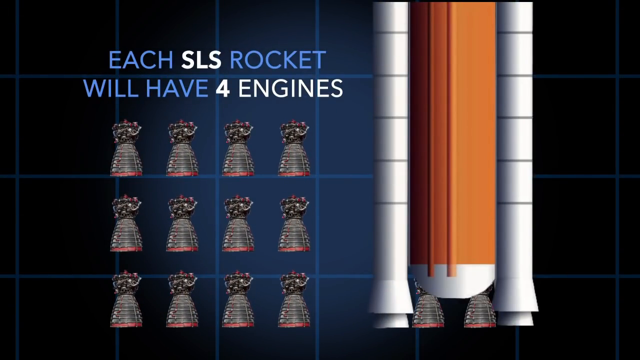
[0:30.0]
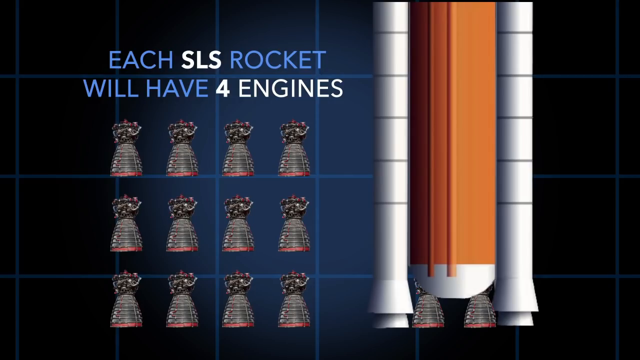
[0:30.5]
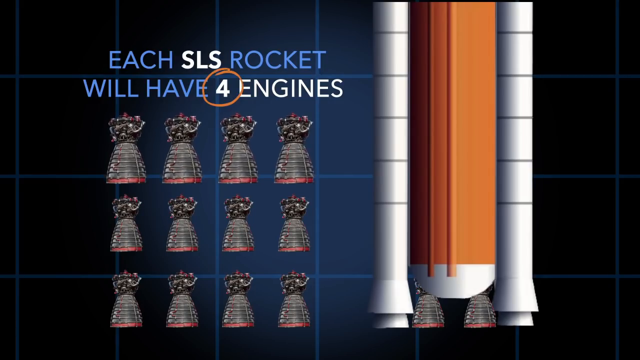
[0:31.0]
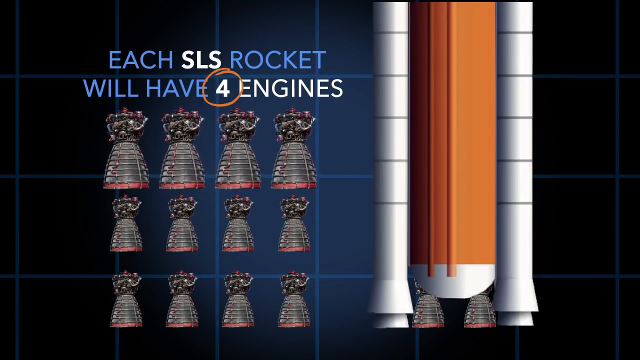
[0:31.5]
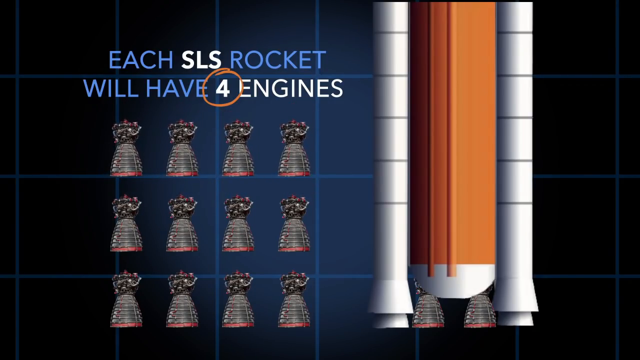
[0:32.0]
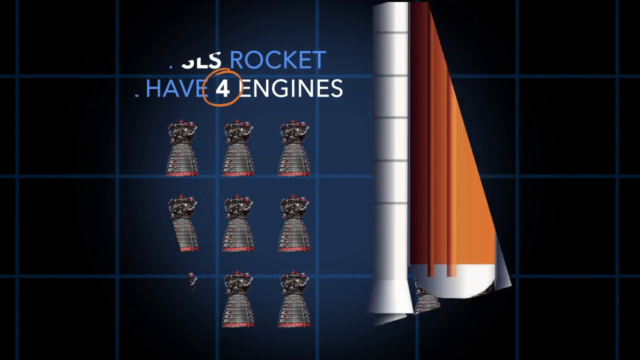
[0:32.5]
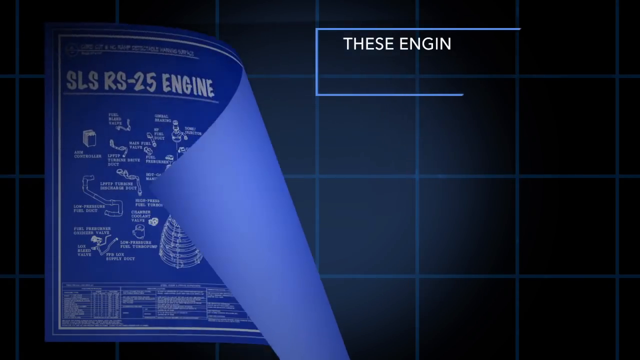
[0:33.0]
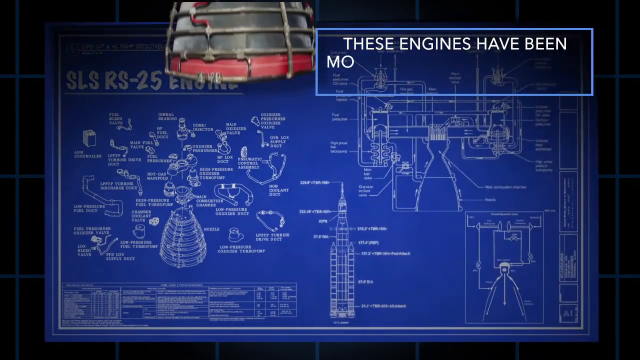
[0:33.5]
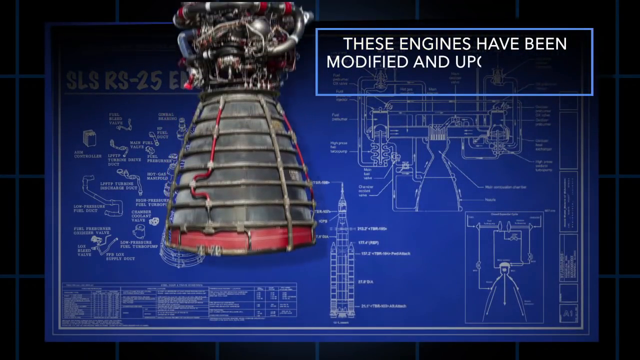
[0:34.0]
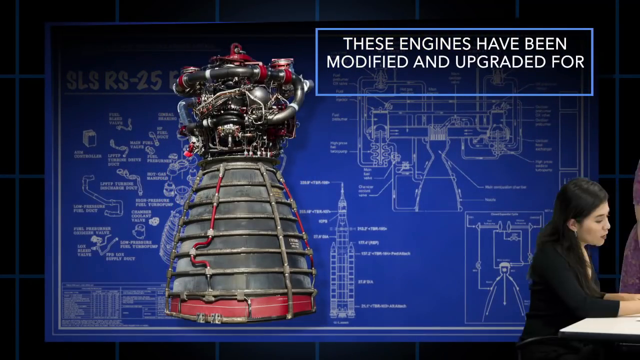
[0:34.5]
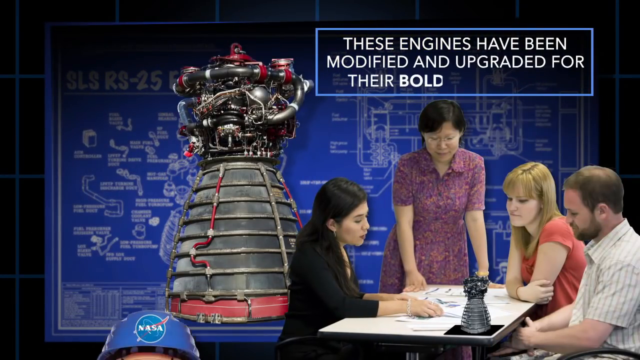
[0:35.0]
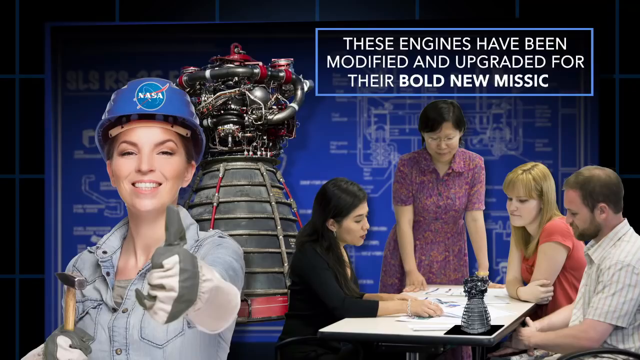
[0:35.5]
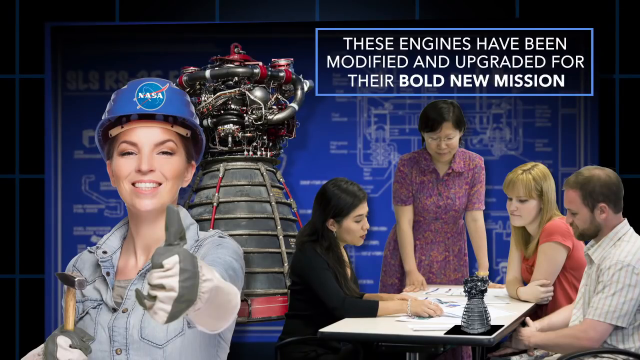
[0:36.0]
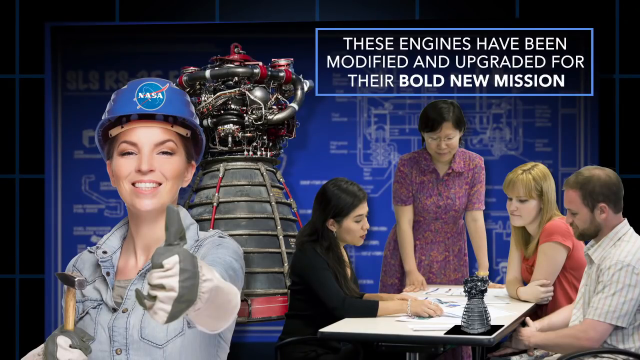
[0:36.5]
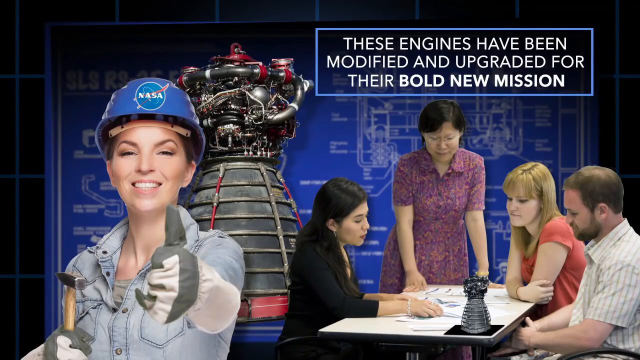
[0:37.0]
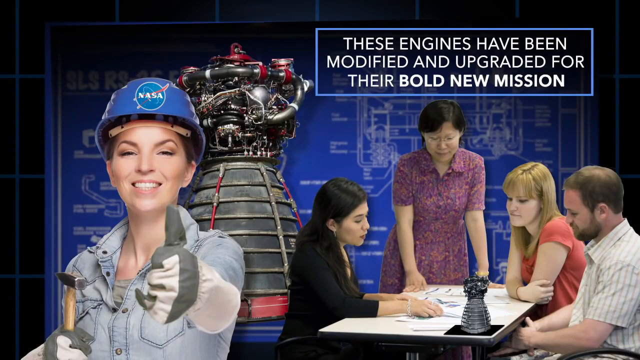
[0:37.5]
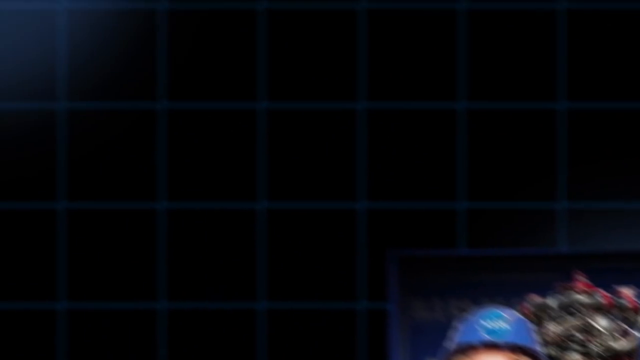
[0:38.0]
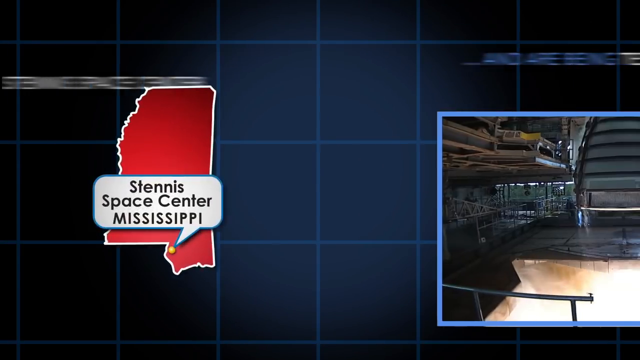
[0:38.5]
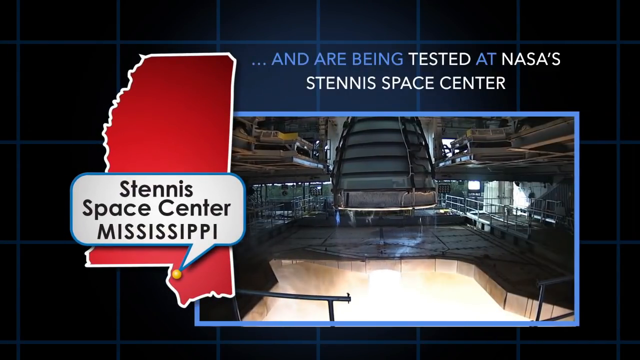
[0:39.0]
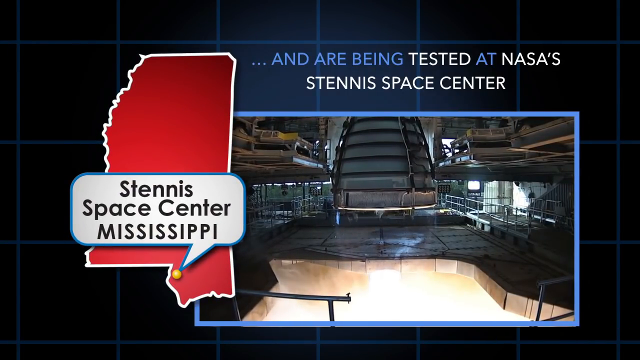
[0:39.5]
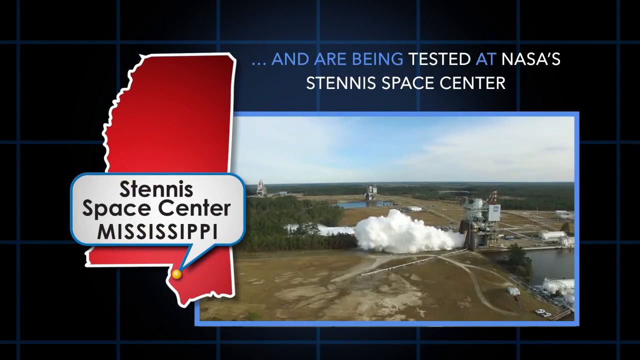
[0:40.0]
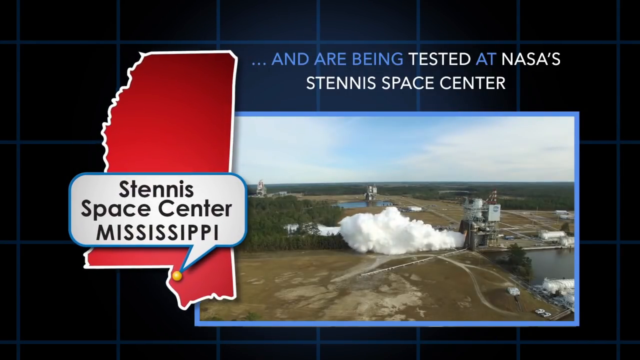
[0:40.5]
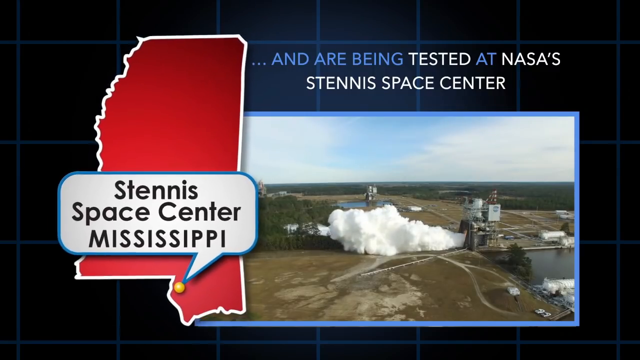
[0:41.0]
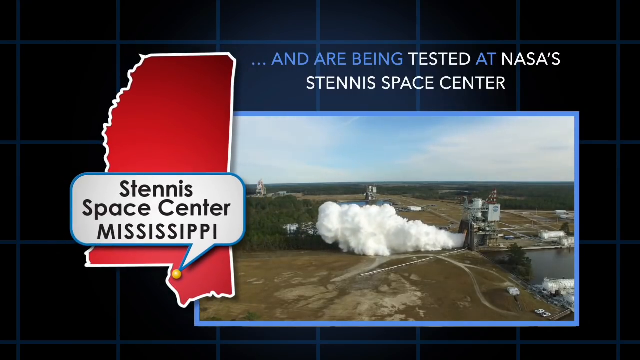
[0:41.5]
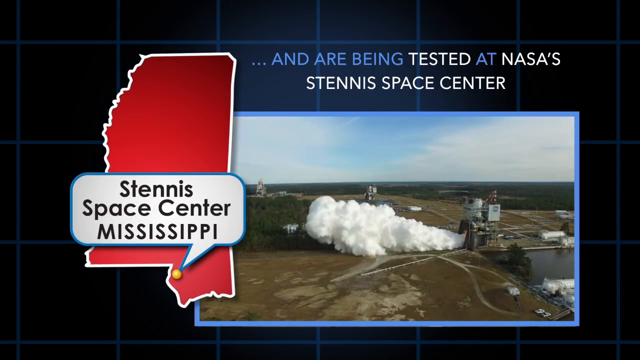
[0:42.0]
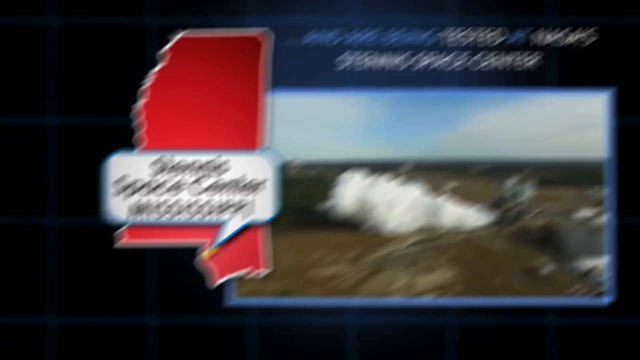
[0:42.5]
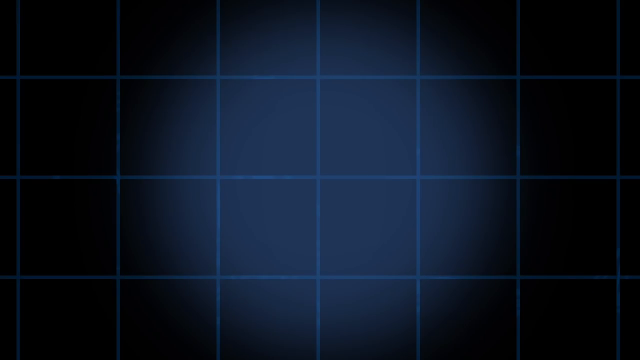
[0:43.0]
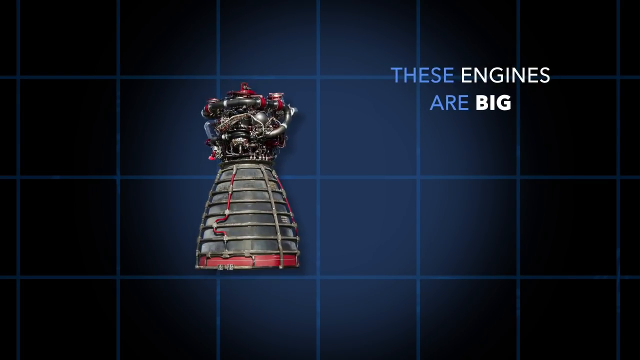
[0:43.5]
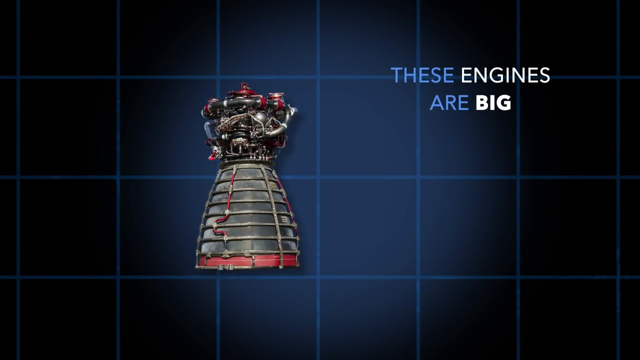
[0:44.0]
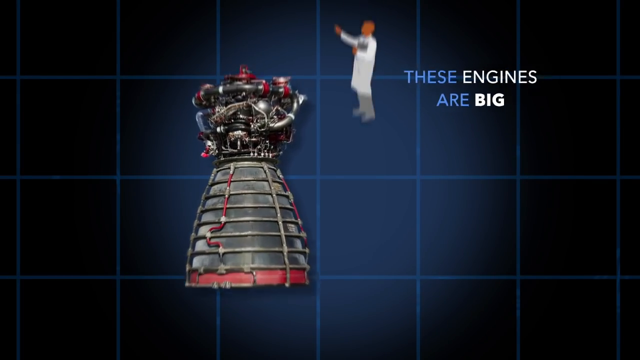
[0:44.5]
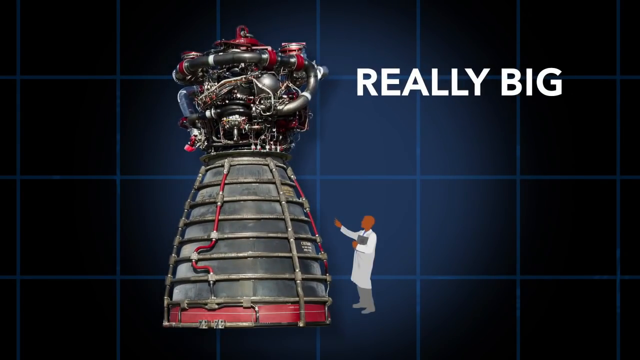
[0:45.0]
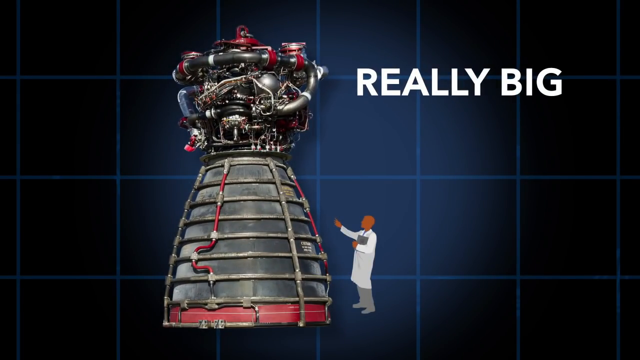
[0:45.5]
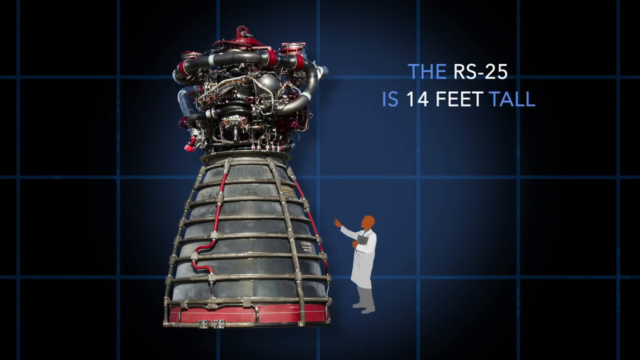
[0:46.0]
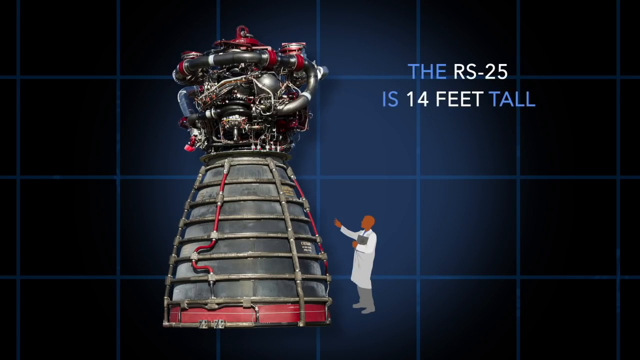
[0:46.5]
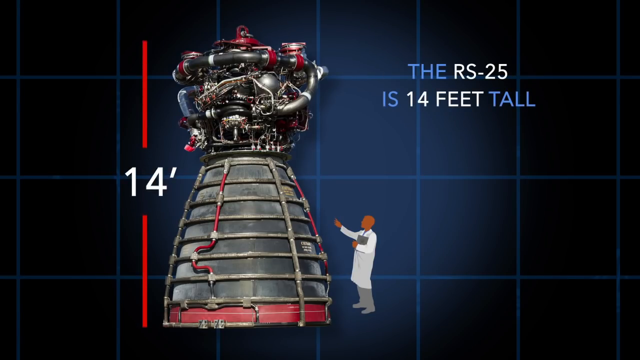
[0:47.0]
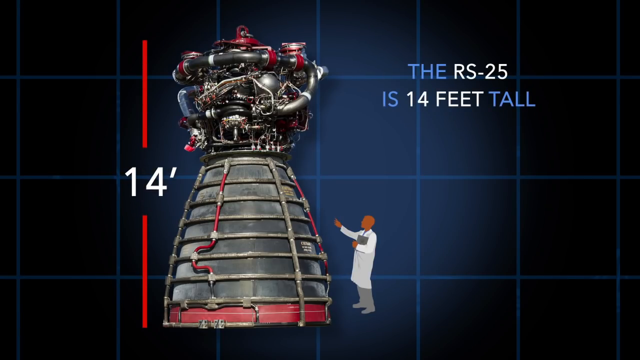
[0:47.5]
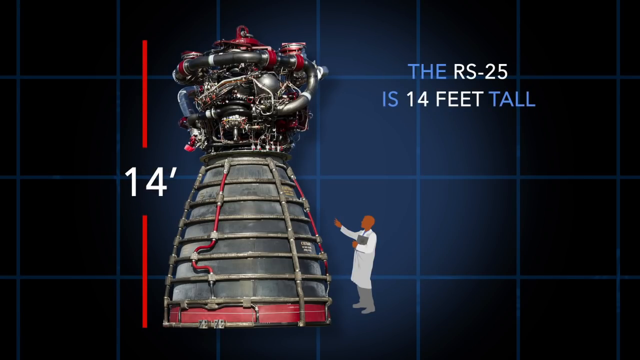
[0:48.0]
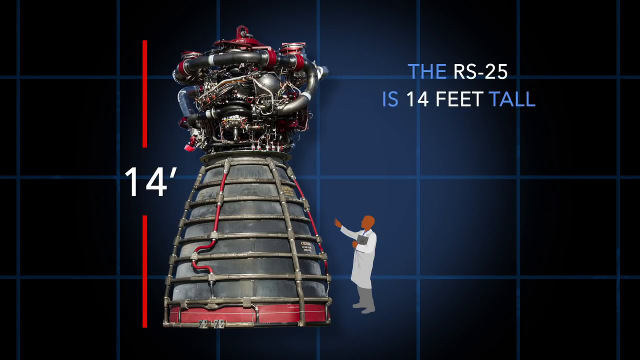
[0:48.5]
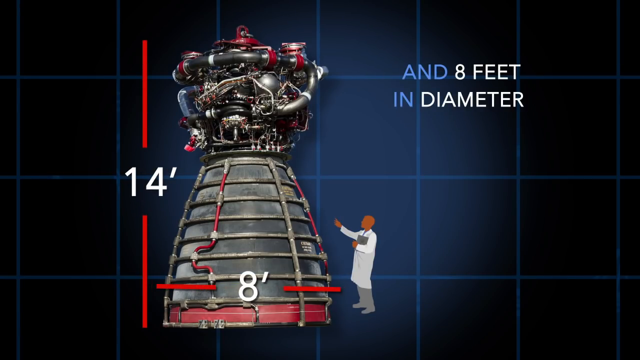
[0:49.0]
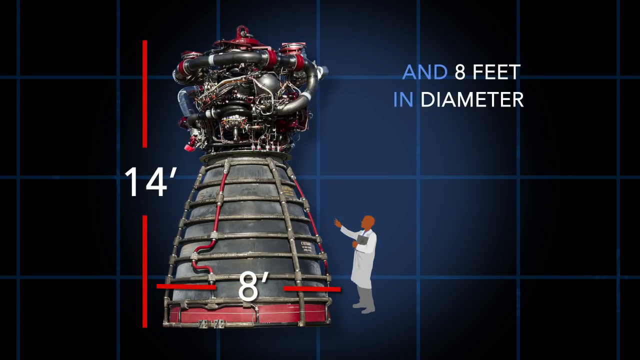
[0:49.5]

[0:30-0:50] White and blue text at the top left reads "each SLS rocket will have four engines." Below it, 12 engines are stacked in three rows of four. The background is a grid of crossing vertical and horizontal blue lines on a partially black background. To the right of the 12 engines is a giant orange and white rocket with two white rockets, one on each side. The scene changes to a Caucasian woman on the left wearing a helmet with the NASA logo on it. Next to the woman, a little behind her, is a rocket engine. To the right of the engine, four people are at a table, one standing and three sitting, looking at some kind of diagrams or blueprints on the table. White text in the top right corner above them reads "these engines have been modified and upgraded for their bold new mission."